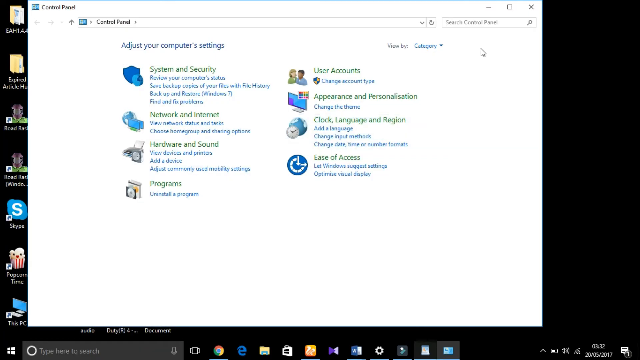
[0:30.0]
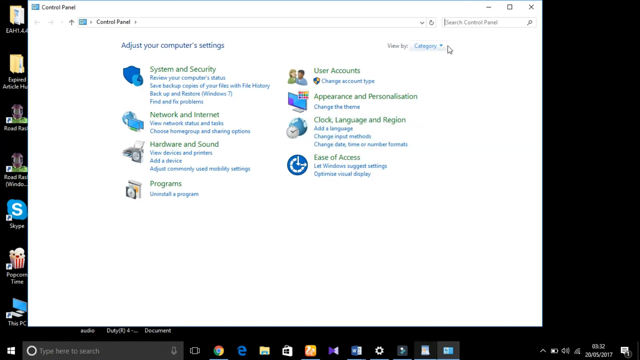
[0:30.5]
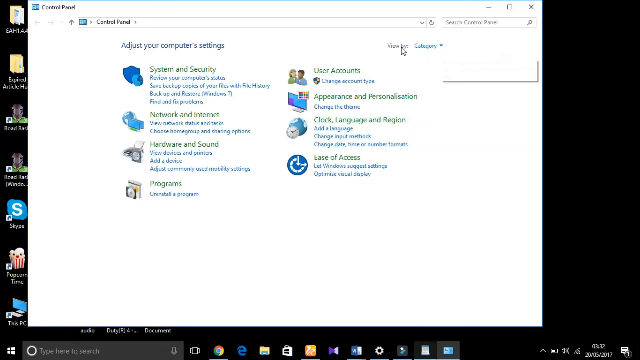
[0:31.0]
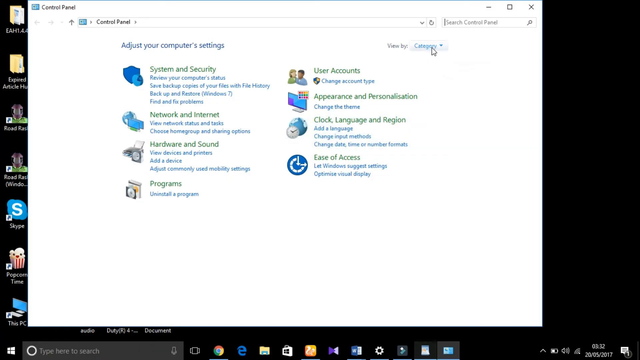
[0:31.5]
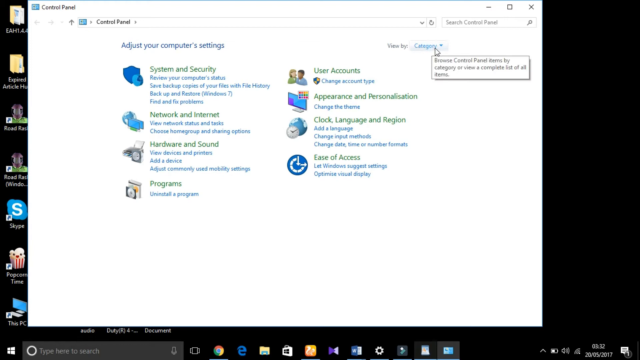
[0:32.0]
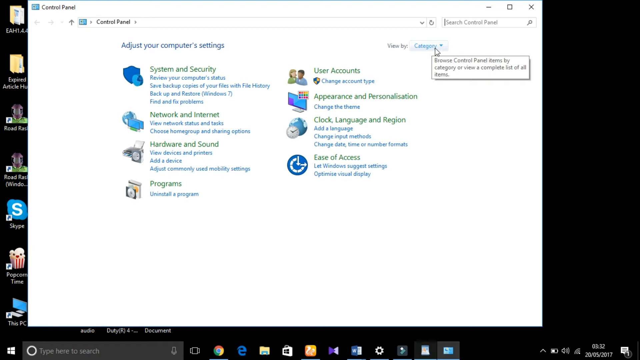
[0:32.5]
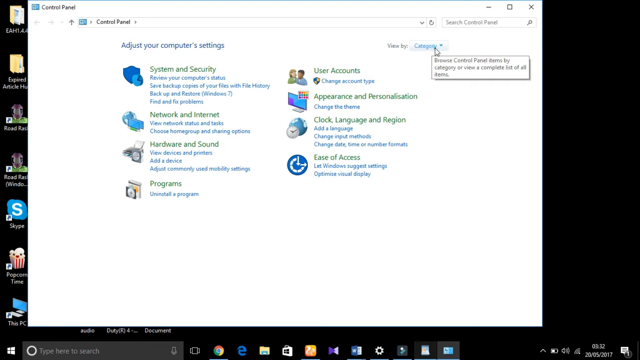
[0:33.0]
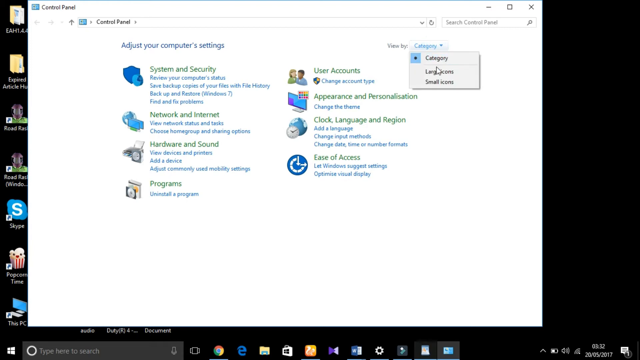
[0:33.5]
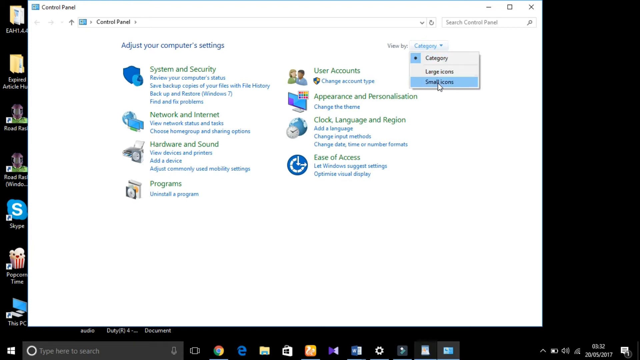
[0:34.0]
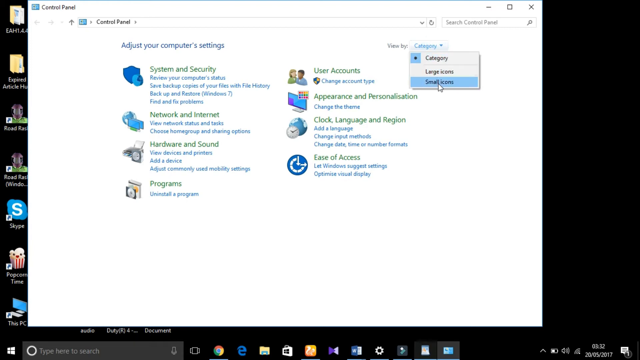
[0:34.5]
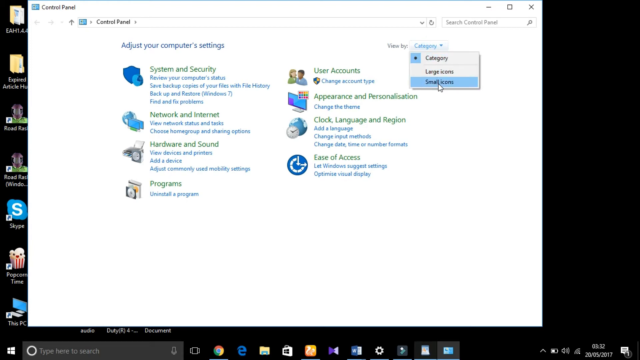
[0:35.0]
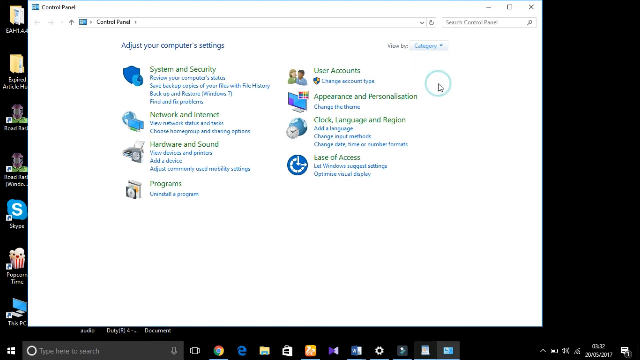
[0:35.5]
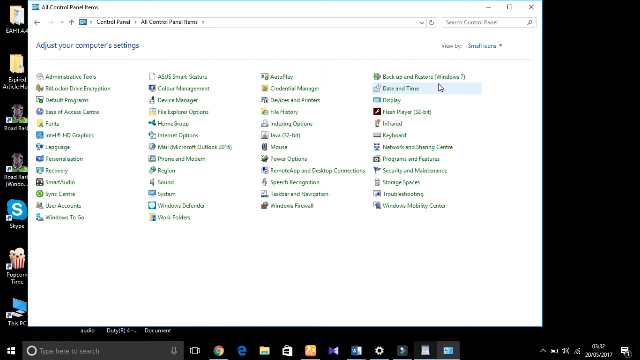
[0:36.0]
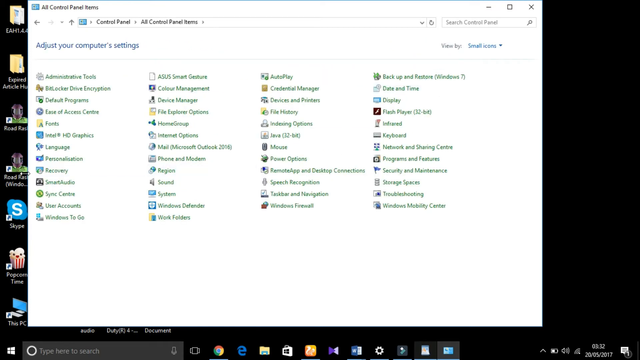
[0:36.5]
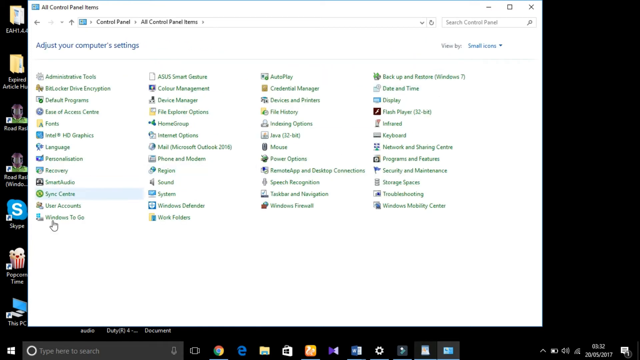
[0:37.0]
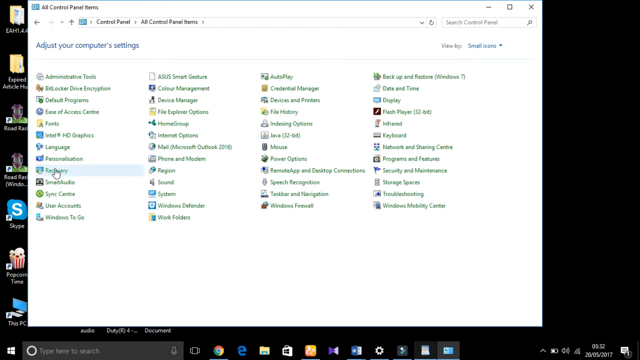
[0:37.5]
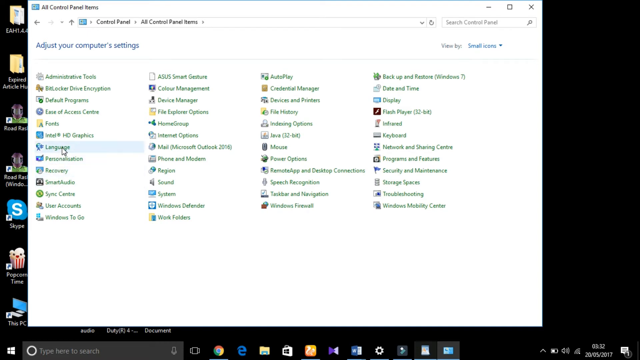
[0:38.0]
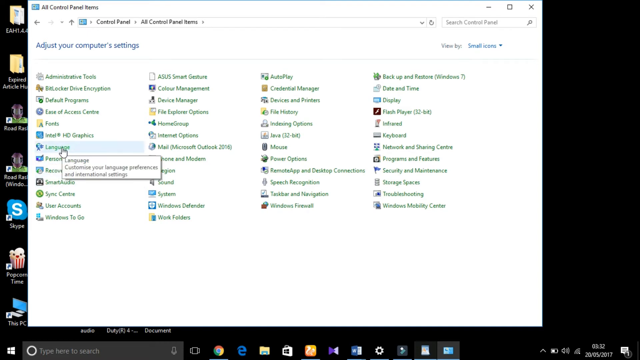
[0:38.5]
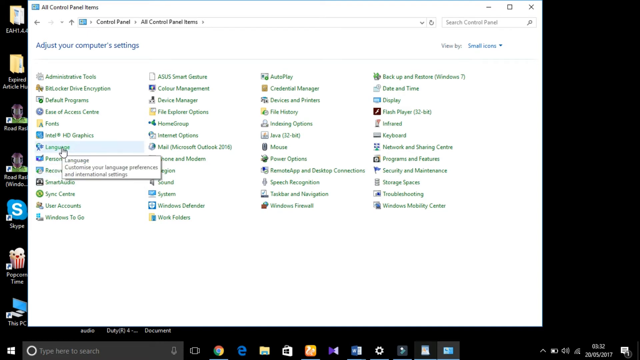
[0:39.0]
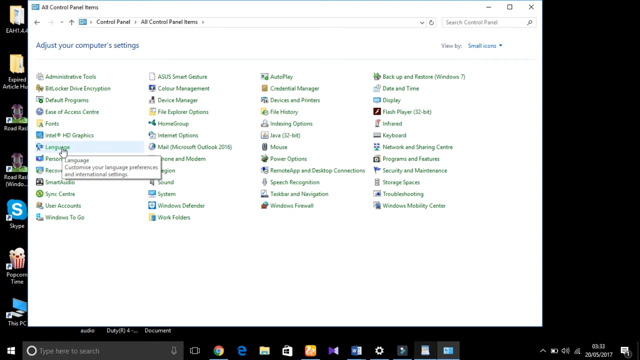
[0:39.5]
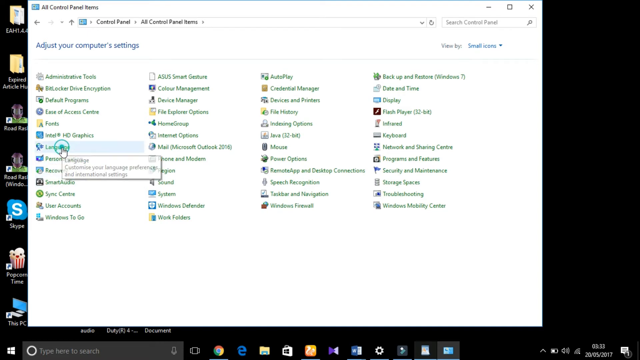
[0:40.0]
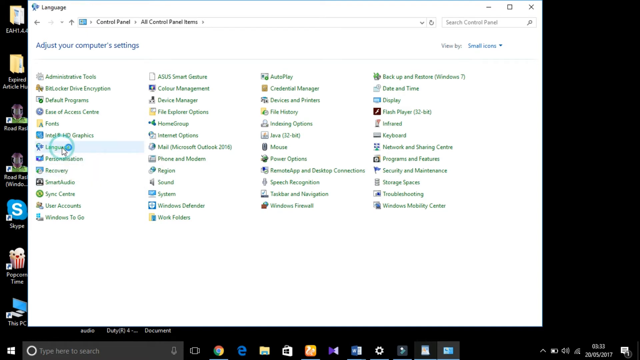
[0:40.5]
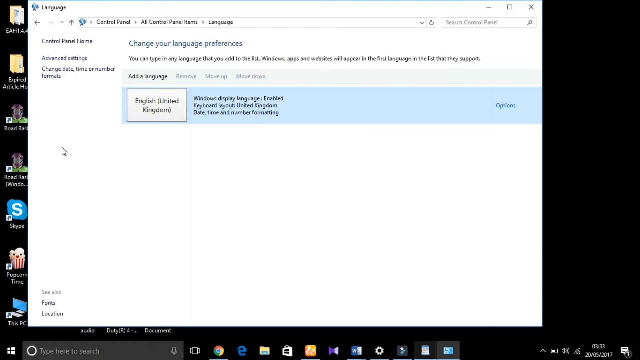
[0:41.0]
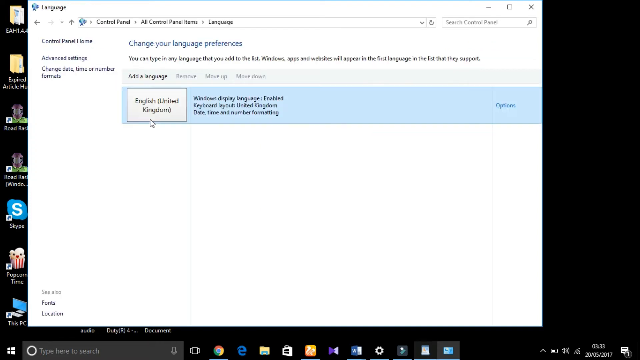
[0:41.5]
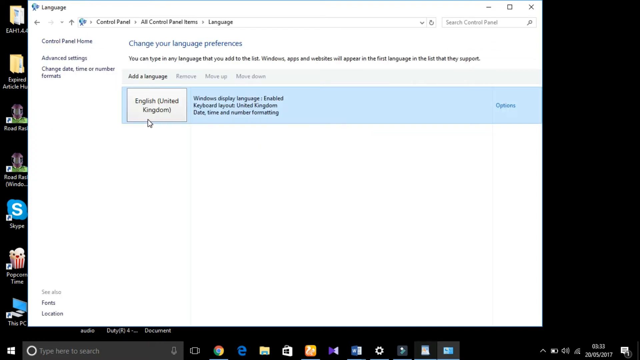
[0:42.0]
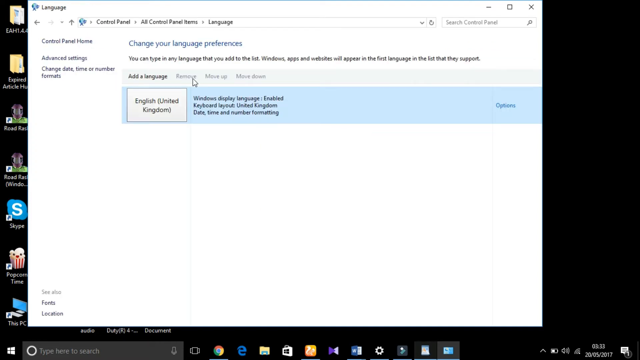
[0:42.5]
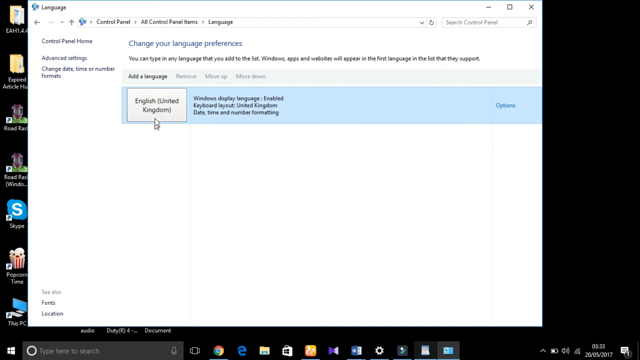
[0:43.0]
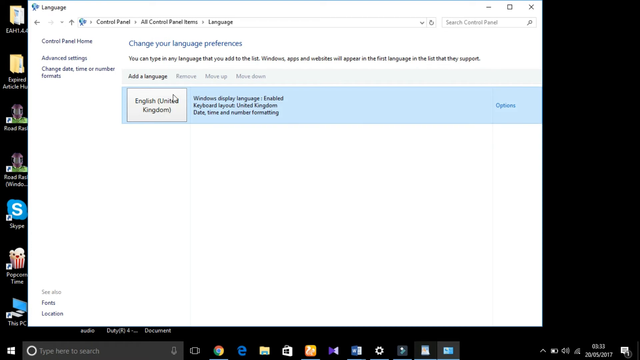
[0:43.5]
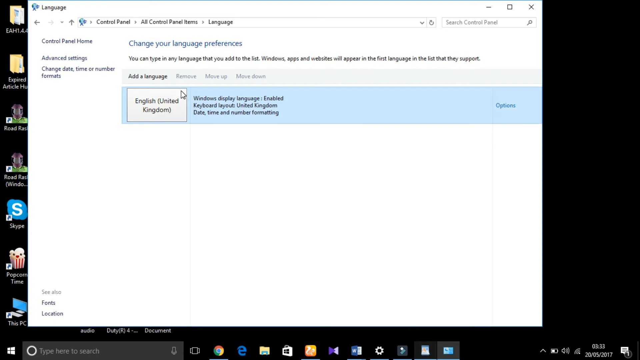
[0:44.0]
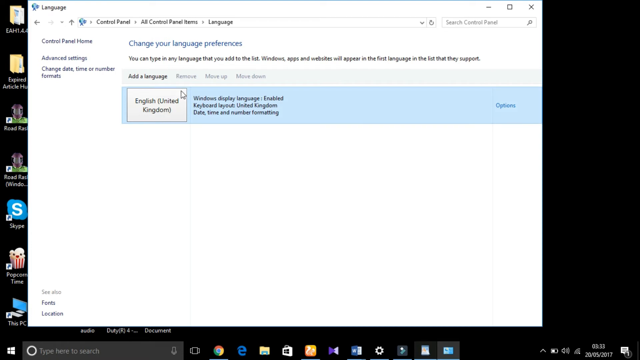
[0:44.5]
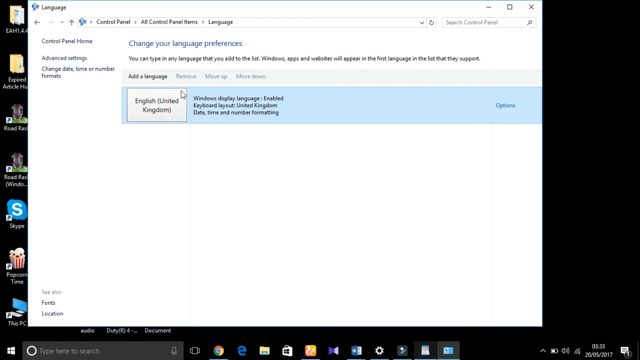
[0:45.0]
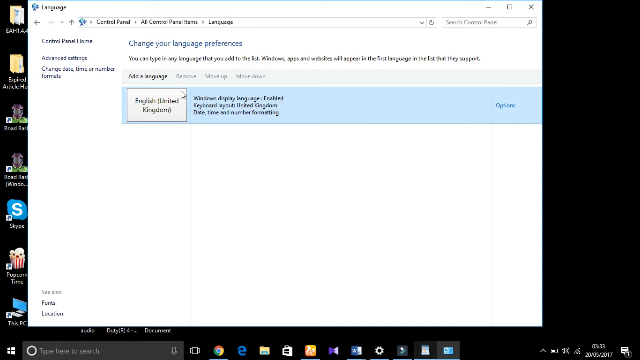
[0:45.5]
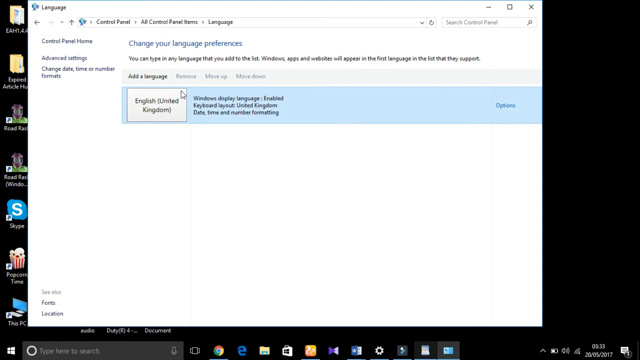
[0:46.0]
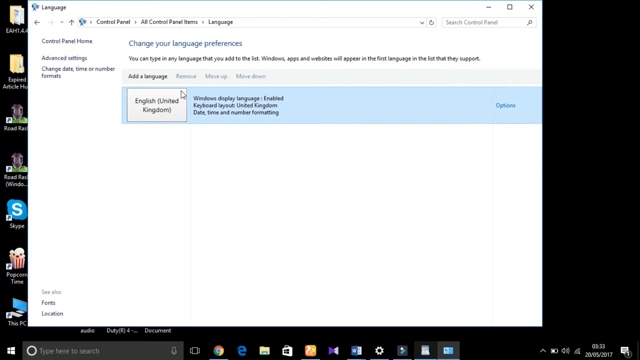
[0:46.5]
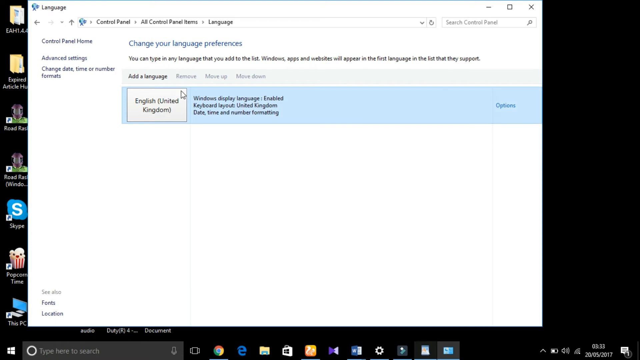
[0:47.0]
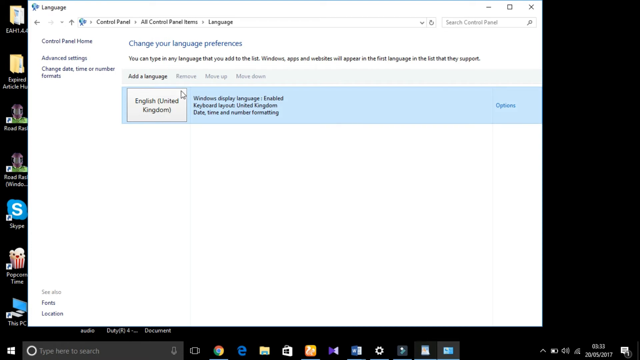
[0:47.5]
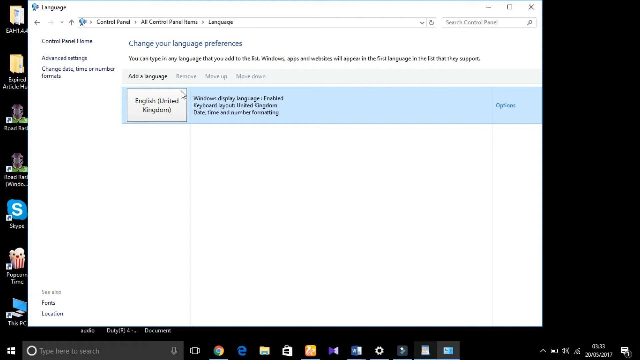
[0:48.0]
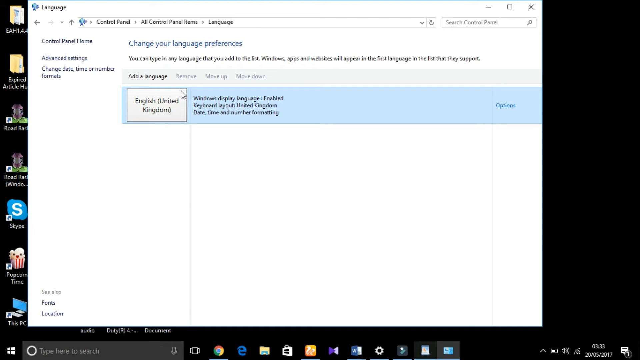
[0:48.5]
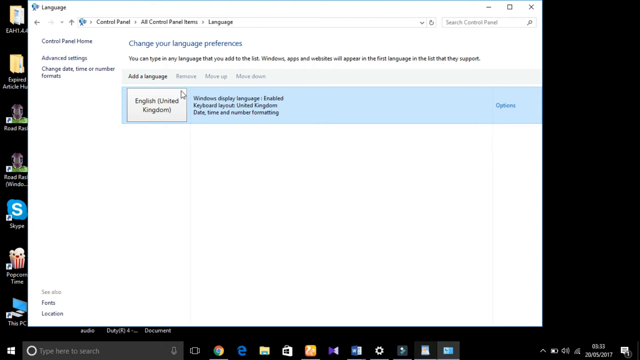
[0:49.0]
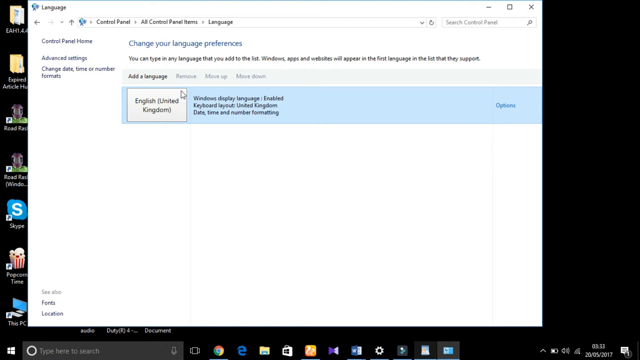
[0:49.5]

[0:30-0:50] The Control Panel is on screen. The cursor is over the word "category" on the upper right side, where "view by" has a drop-down box, and a little window with a description appears. Category is clicked, a window pops up, and small icons is chosen, highlighted in blue. A screen with a bunch of icons follows, and the cursor is in the first column. After scrolling up, the cursor becomes a finger icon and clicks on language. The window changes and reads "change your language preferences". The preference shows English United Kingdom highlighted in blue, and the cursor points to that box. The cursor goes back, pointing in the menu box to English United Kingdom, then to Remove, and then back to the box that says English United Kingdom.